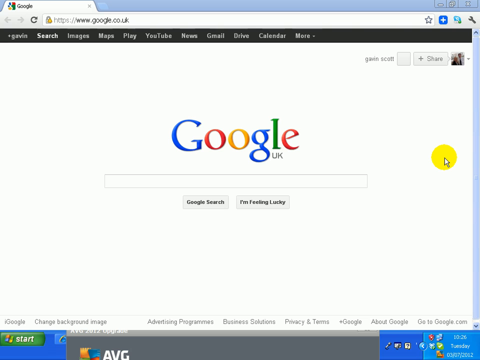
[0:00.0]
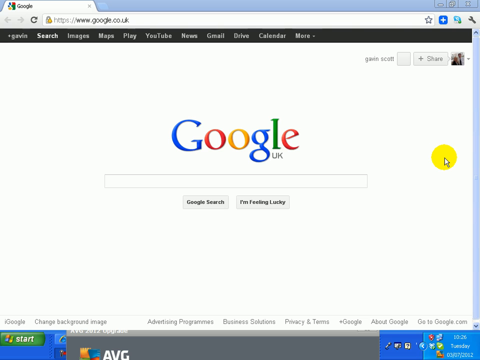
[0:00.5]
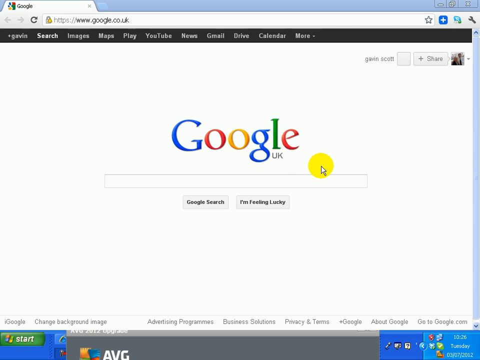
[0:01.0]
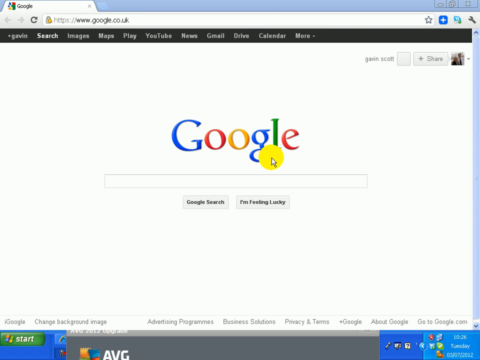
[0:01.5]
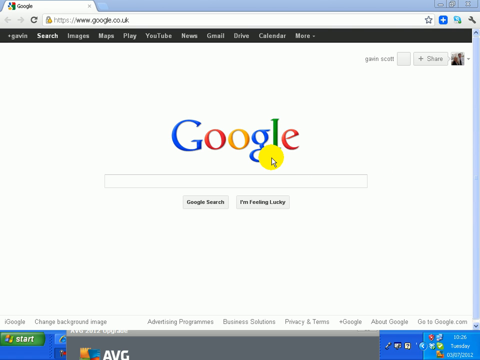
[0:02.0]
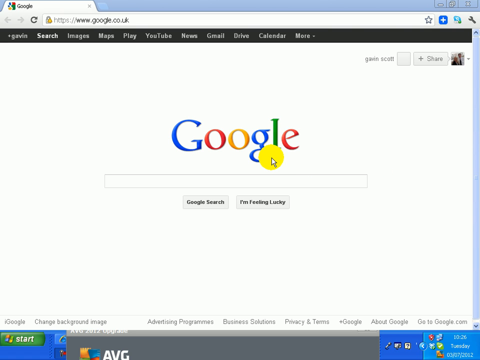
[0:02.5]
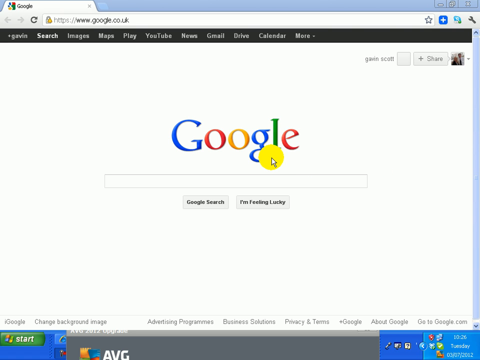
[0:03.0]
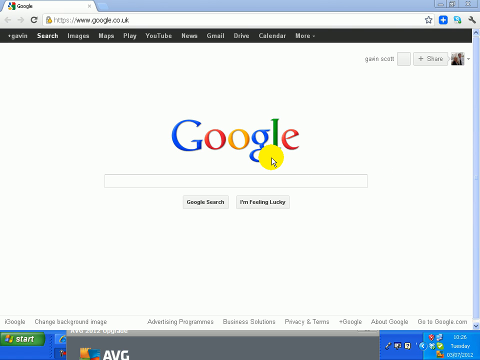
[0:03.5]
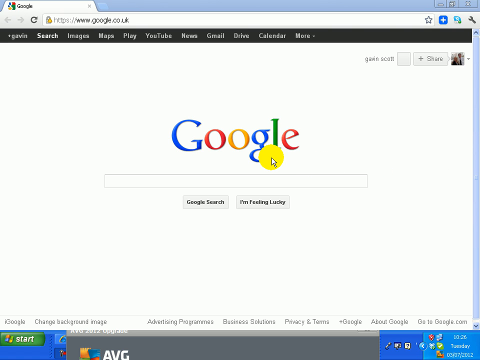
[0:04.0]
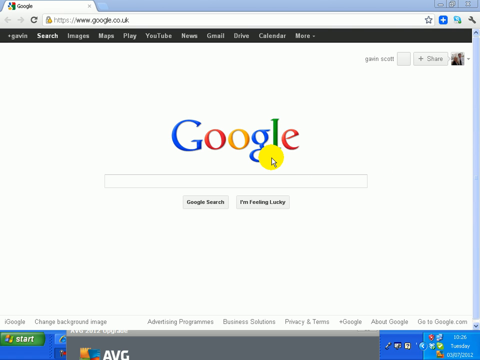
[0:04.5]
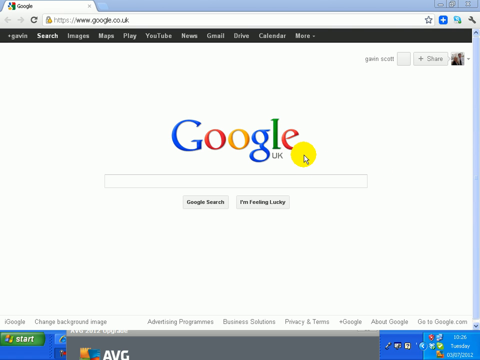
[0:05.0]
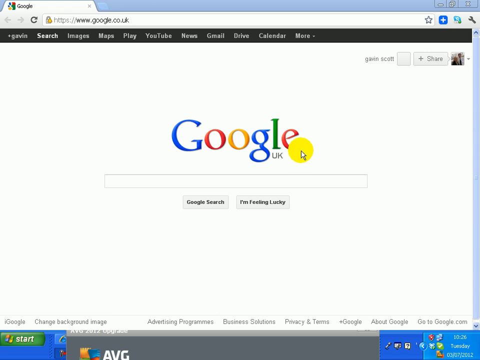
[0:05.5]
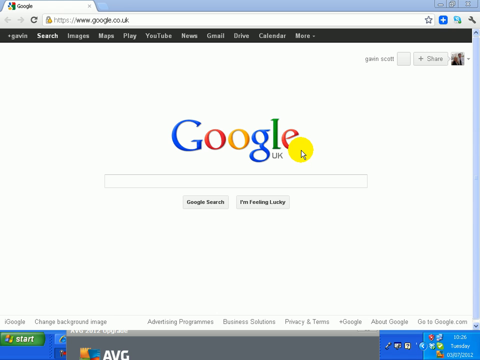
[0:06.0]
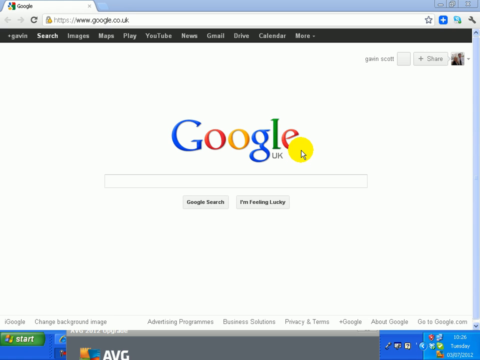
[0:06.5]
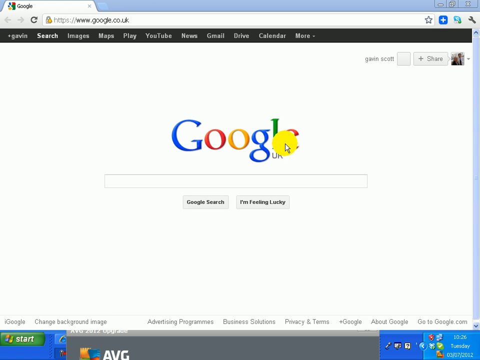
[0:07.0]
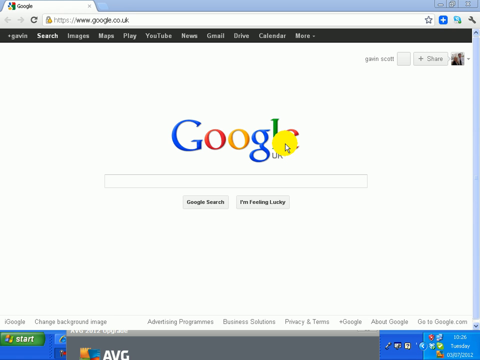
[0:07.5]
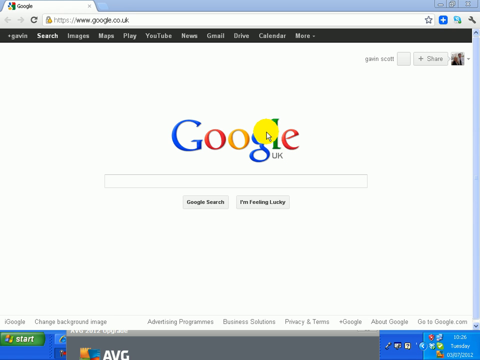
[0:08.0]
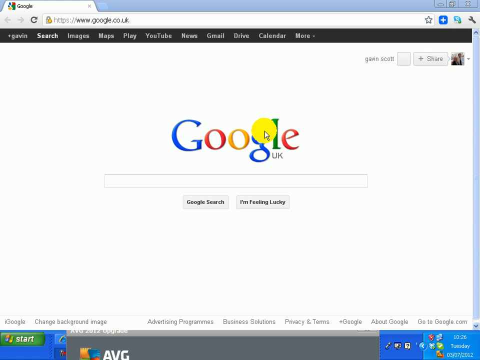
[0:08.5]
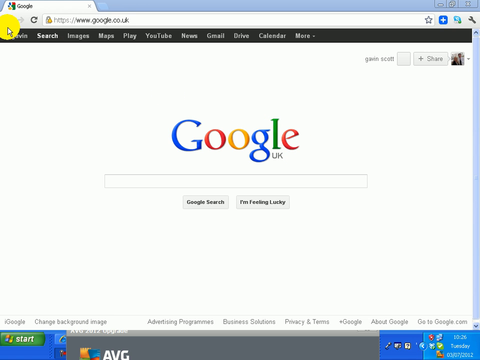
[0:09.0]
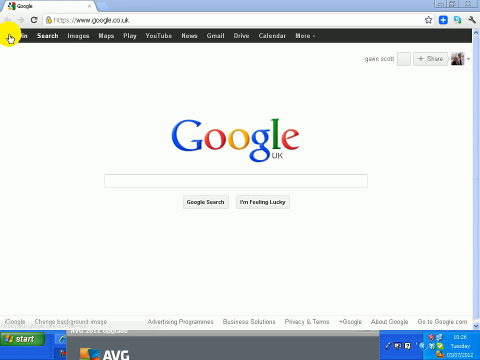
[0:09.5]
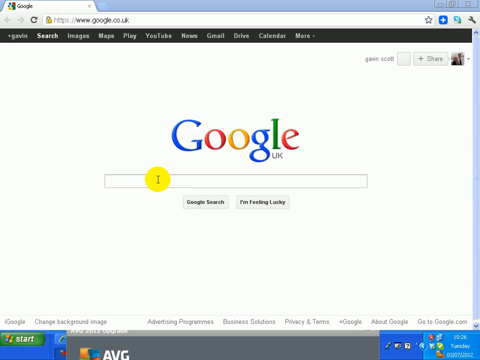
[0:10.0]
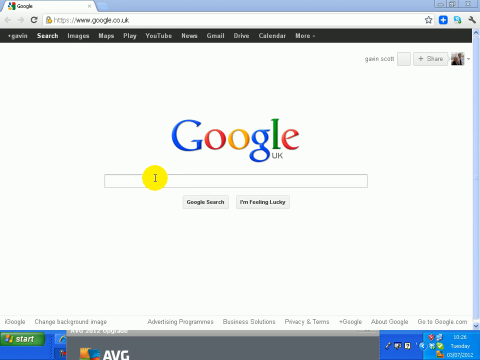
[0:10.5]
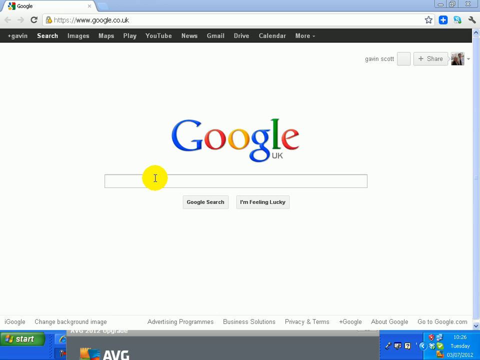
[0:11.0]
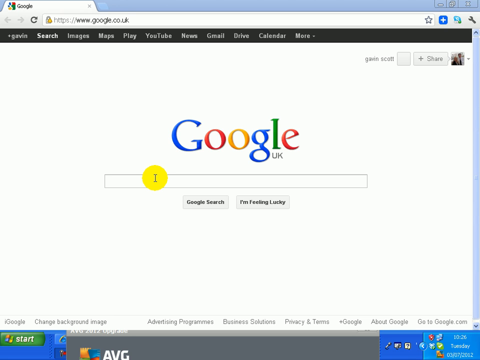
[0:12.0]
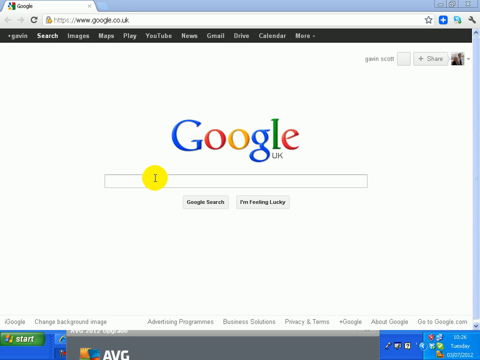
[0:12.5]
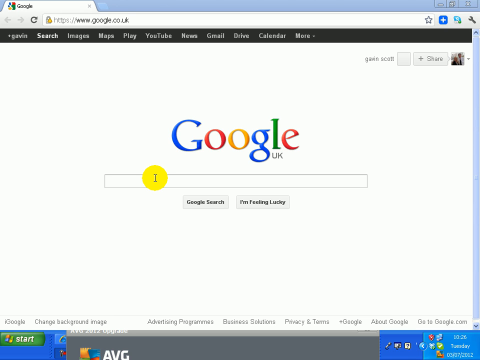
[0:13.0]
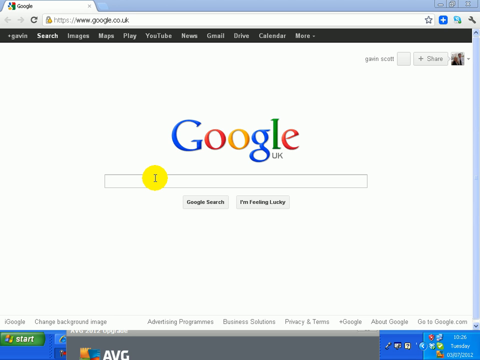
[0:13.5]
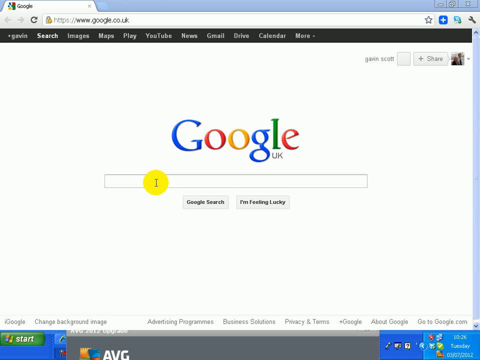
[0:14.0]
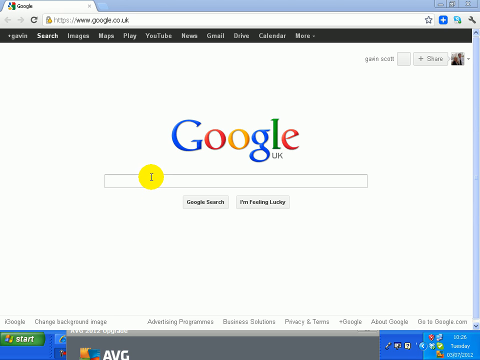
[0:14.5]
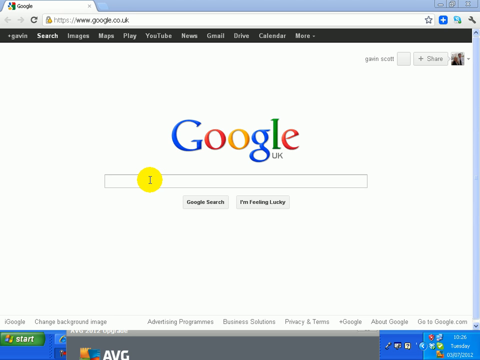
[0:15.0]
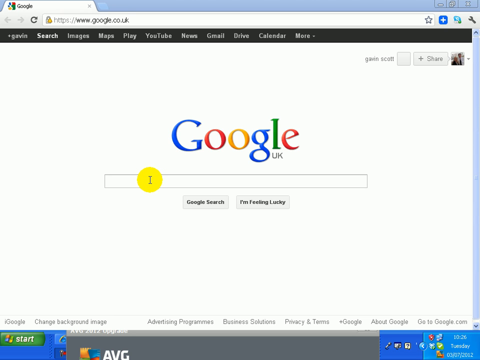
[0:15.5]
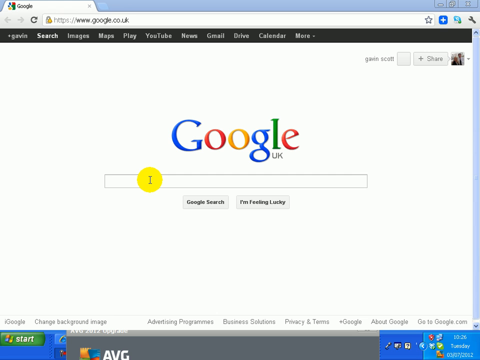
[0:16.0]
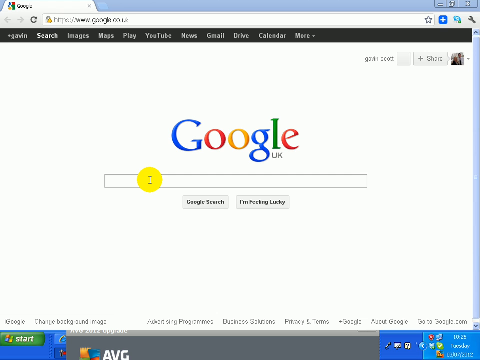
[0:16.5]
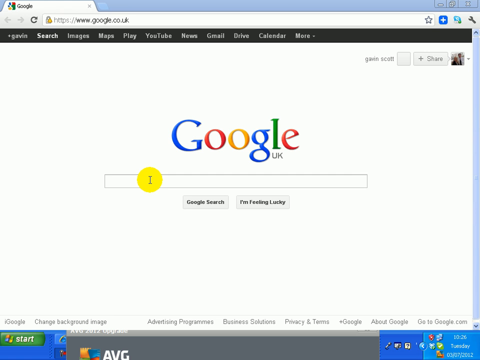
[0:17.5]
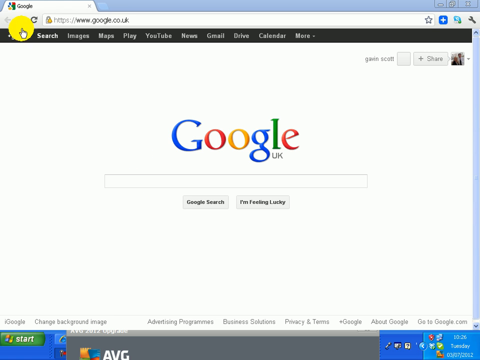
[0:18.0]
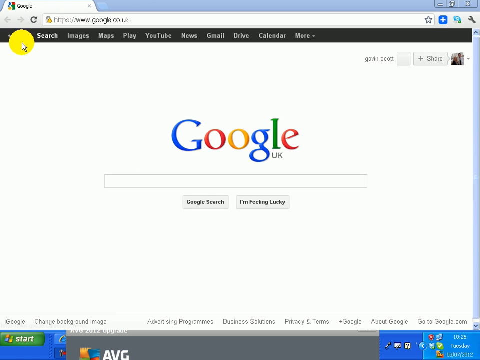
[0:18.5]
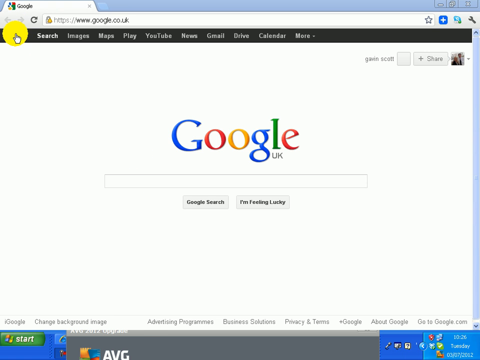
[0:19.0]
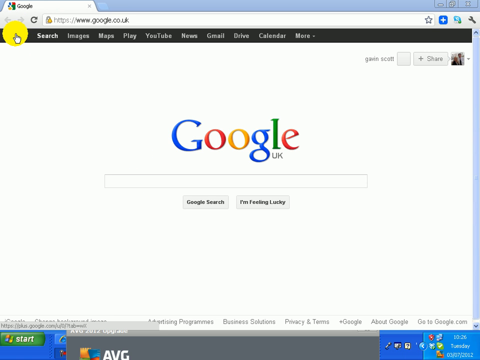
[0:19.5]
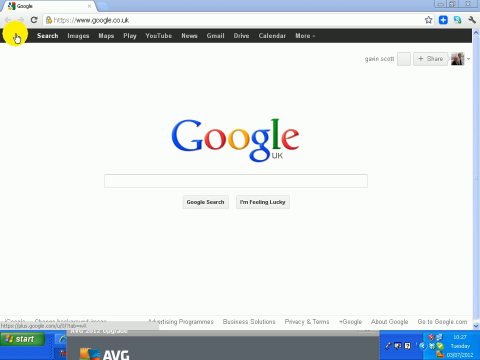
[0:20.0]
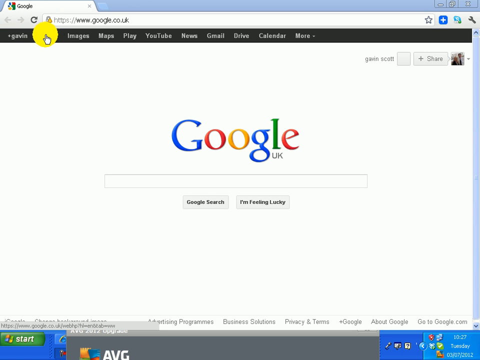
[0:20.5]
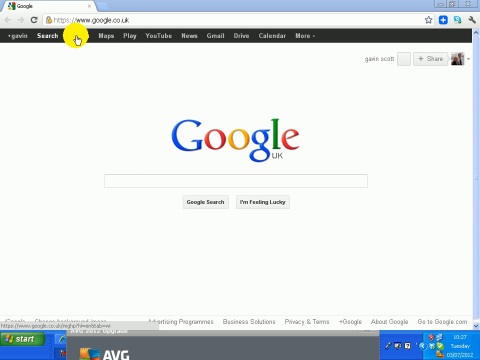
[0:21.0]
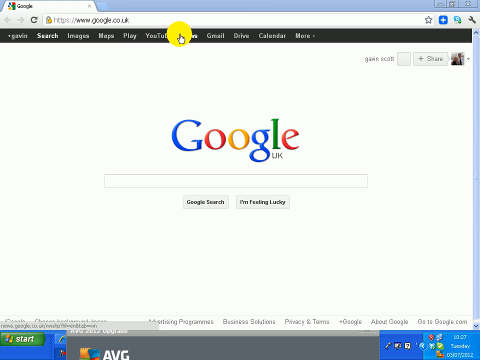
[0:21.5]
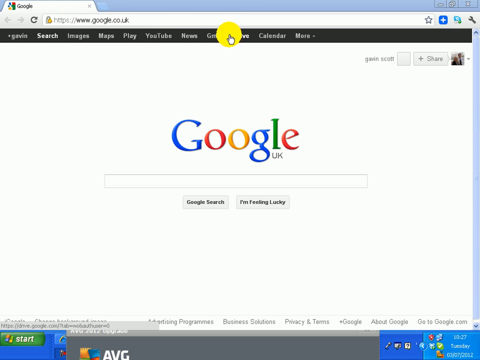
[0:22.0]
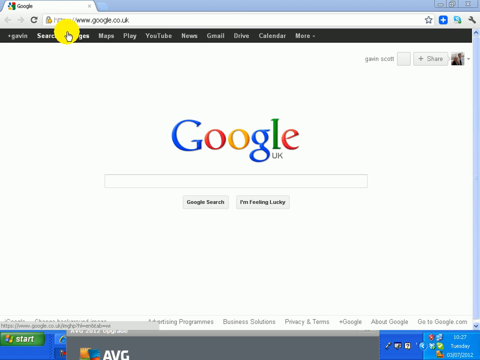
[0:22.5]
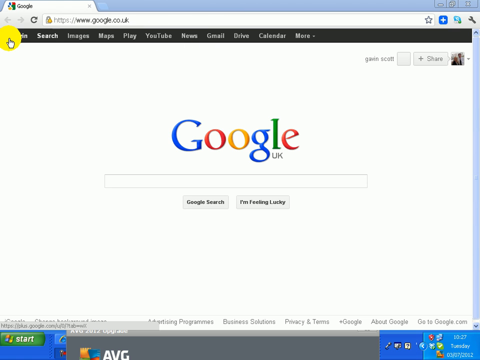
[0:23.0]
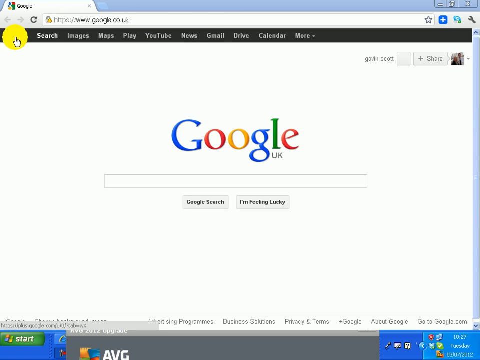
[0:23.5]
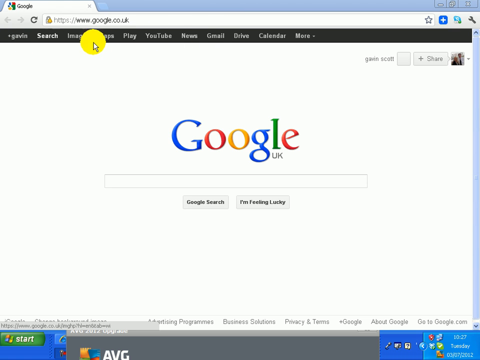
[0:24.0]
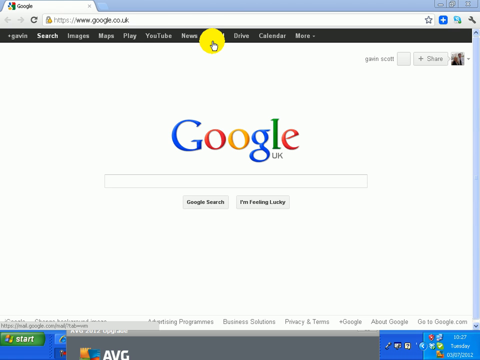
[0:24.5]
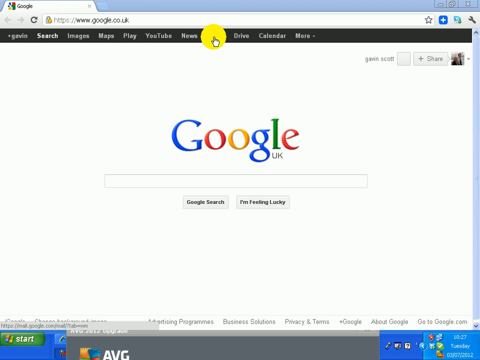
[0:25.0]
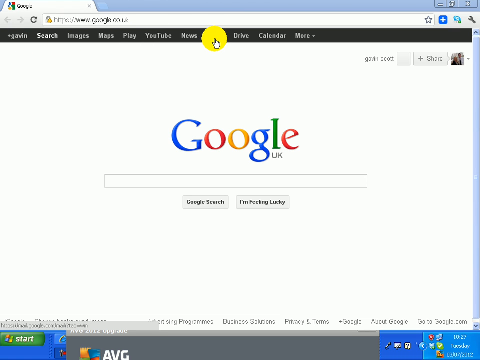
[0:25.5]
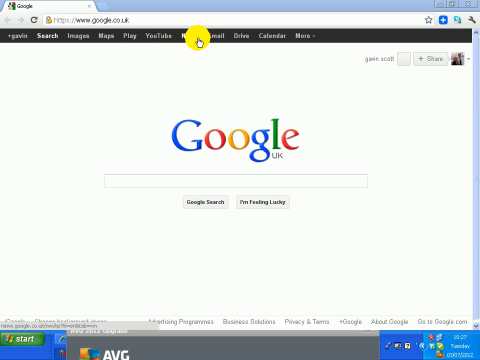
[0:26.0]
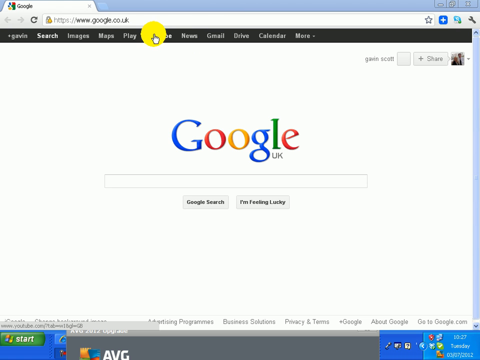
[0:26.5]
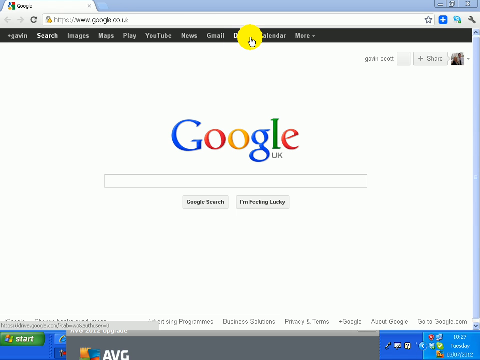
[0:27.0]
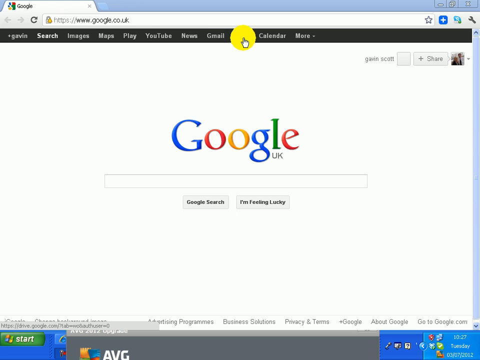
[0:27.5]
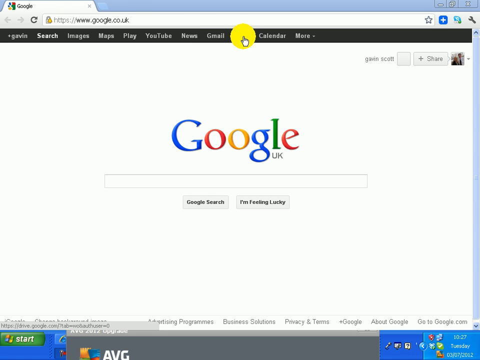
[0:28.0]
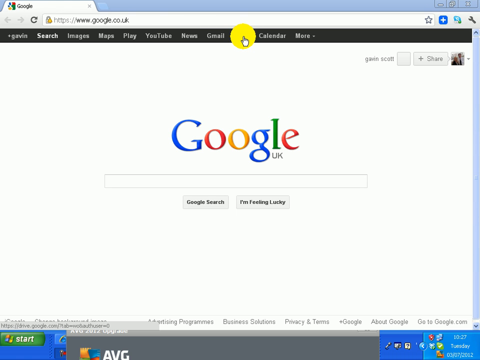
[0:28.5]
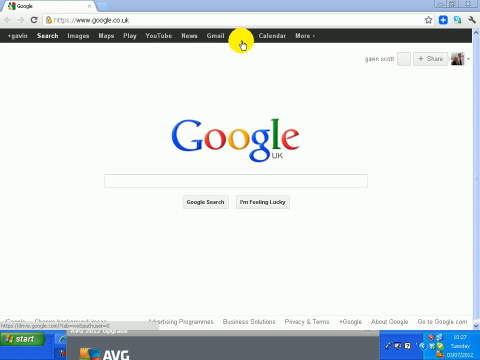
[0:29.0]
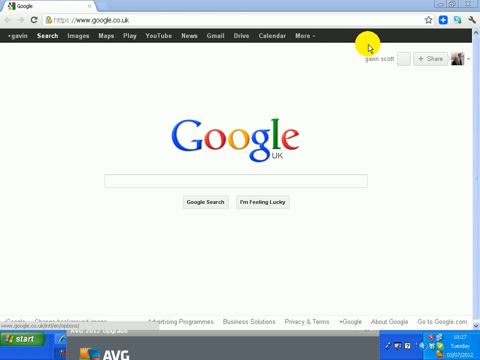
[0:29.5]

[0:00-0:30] A live recording of someone's screen shows Google, with the cursor surrounded by yellow dots. The person moves this yellow dot up to the bar above, which has labels on it such as "search", "images", "maps", "play", "YouTube", "news", "Gmail", "Drive", "calendar" and "more".